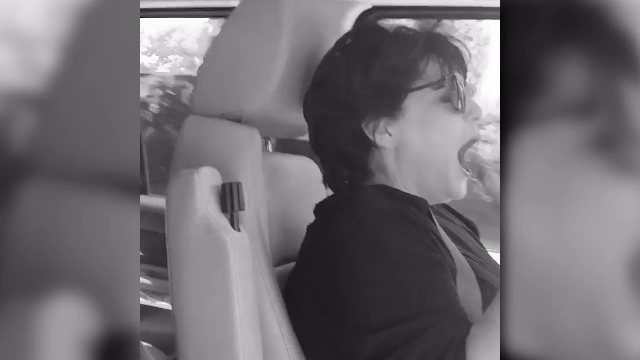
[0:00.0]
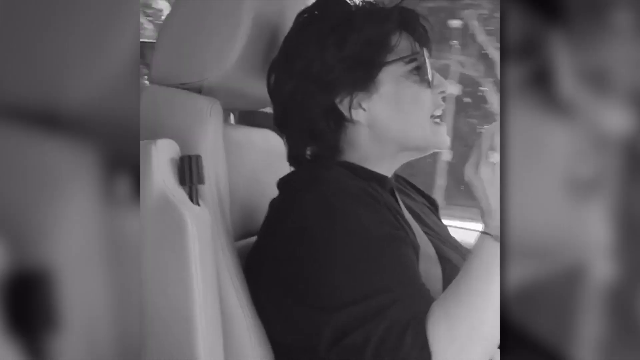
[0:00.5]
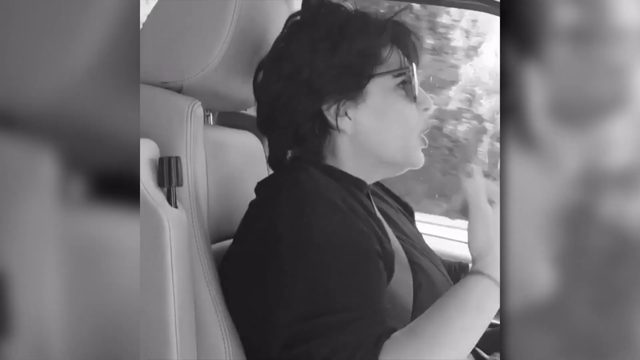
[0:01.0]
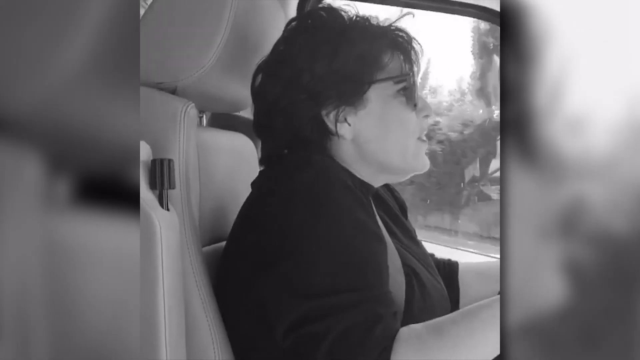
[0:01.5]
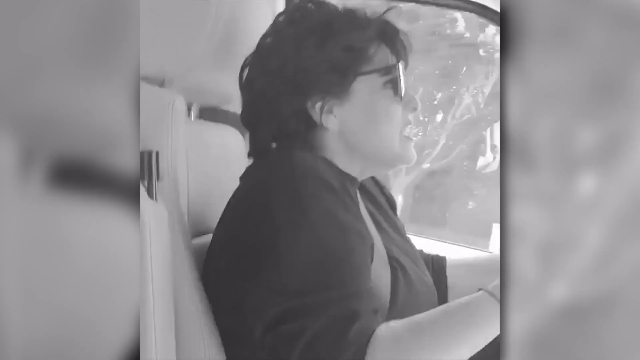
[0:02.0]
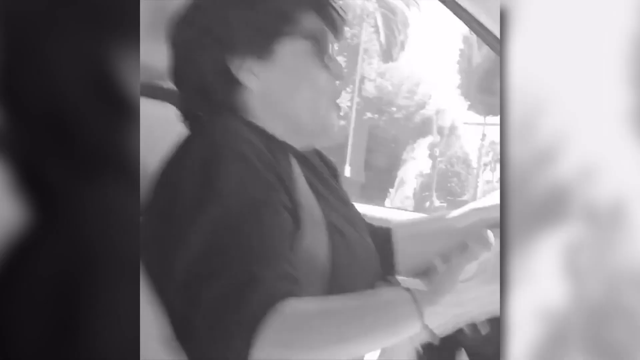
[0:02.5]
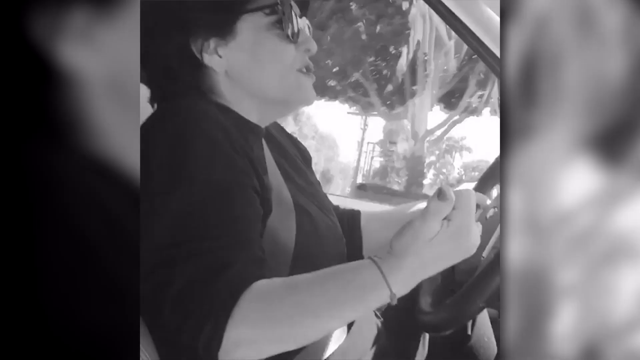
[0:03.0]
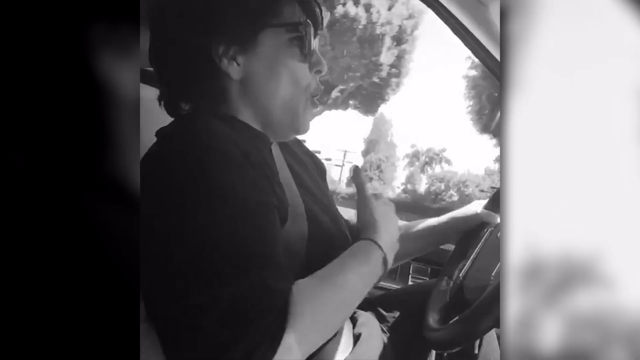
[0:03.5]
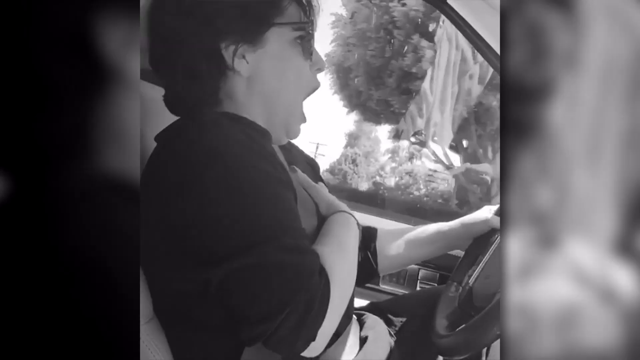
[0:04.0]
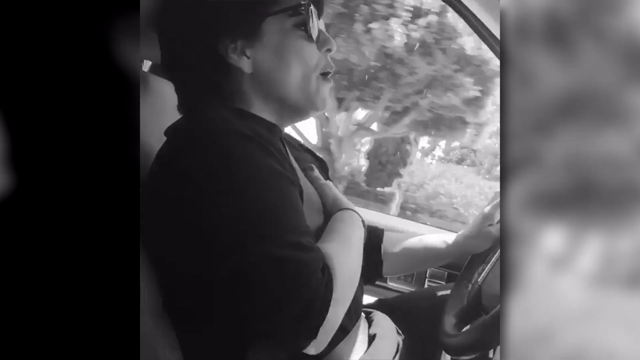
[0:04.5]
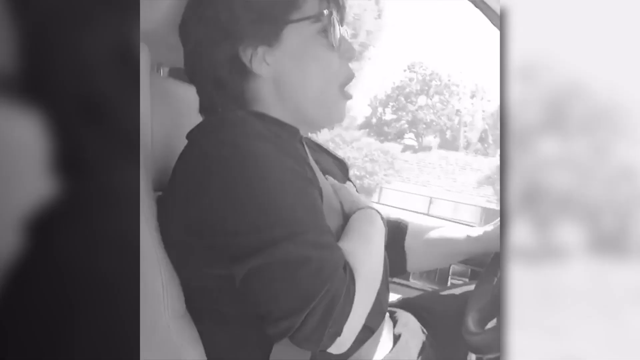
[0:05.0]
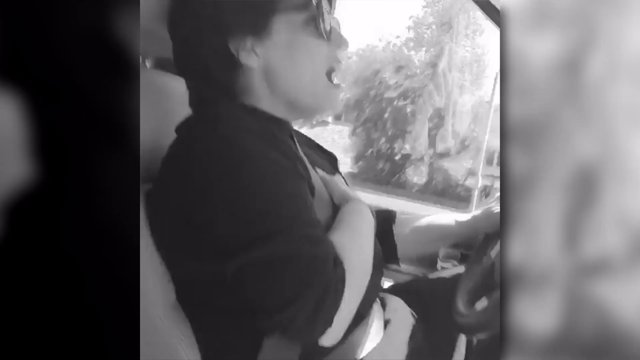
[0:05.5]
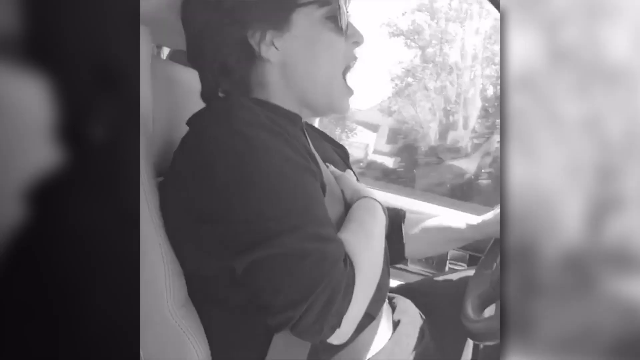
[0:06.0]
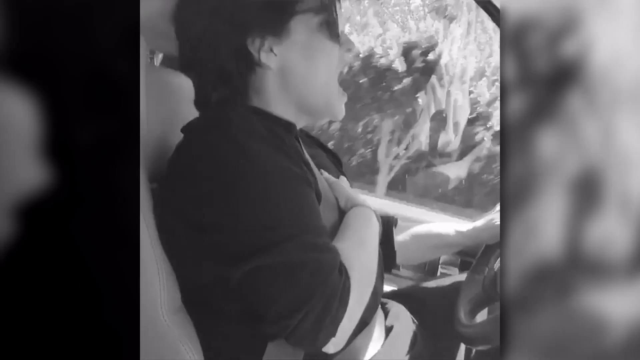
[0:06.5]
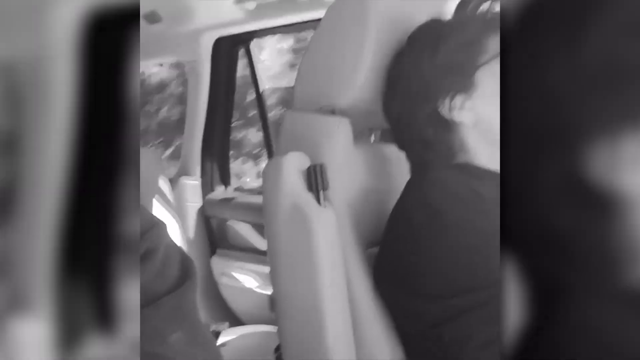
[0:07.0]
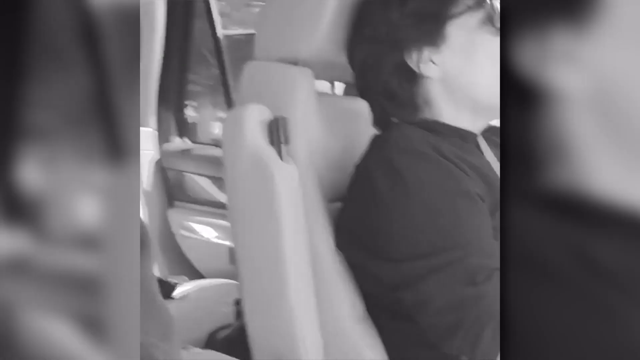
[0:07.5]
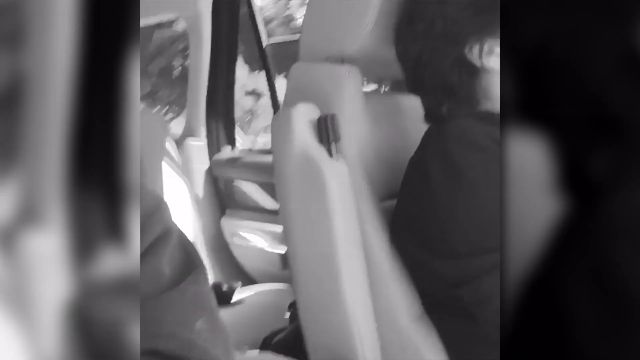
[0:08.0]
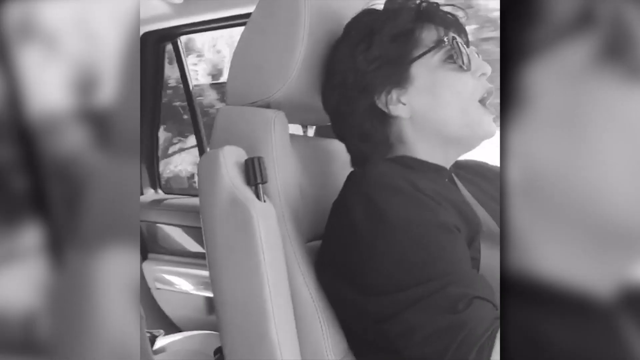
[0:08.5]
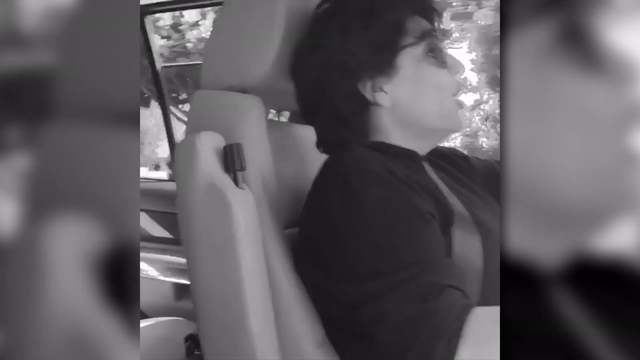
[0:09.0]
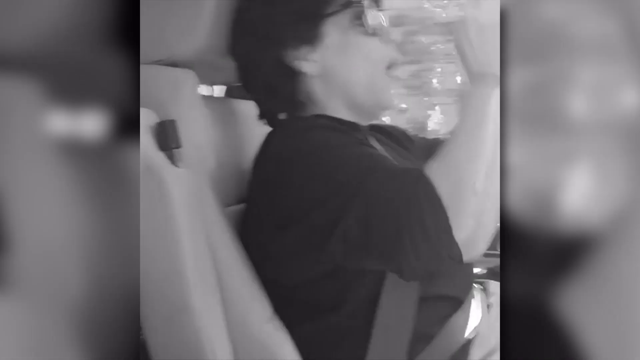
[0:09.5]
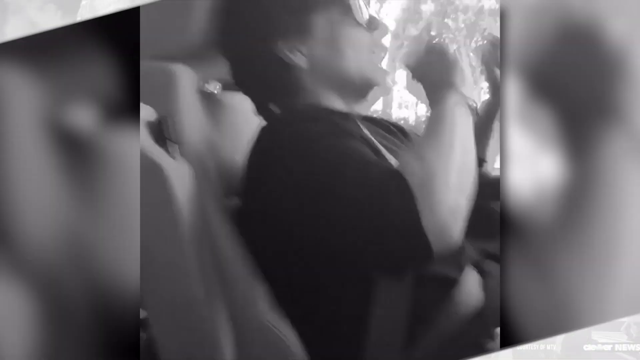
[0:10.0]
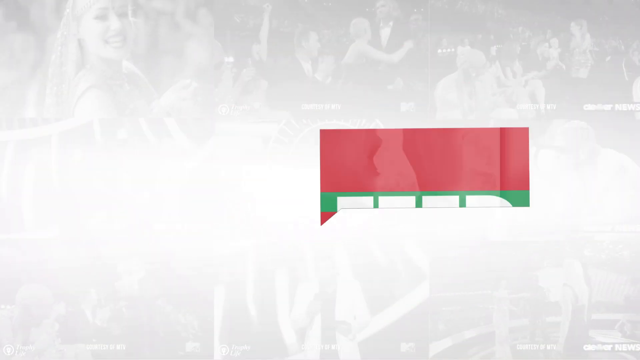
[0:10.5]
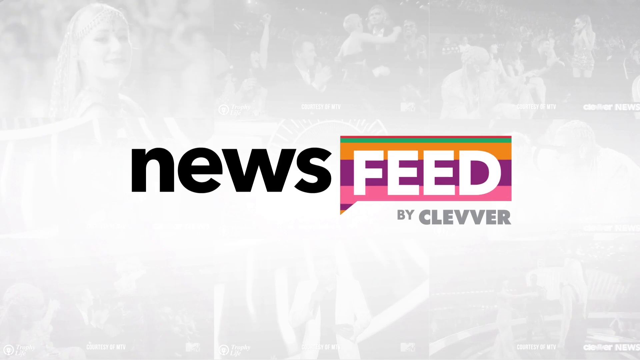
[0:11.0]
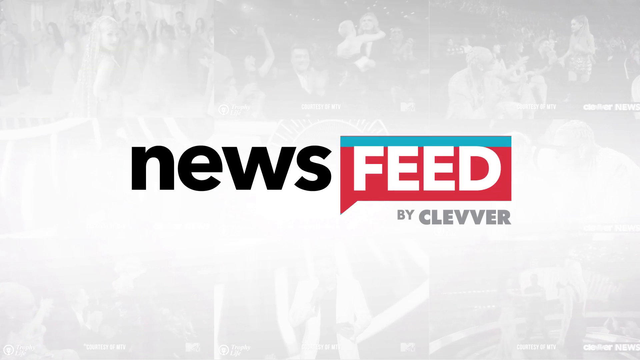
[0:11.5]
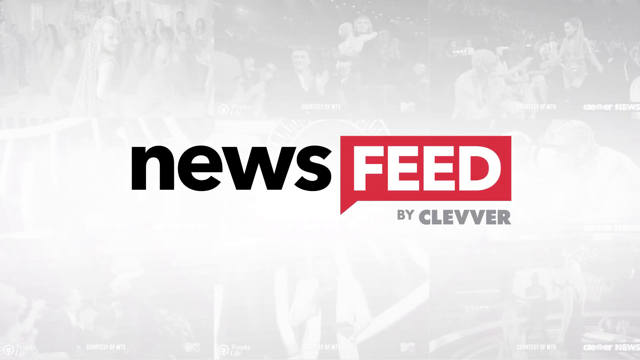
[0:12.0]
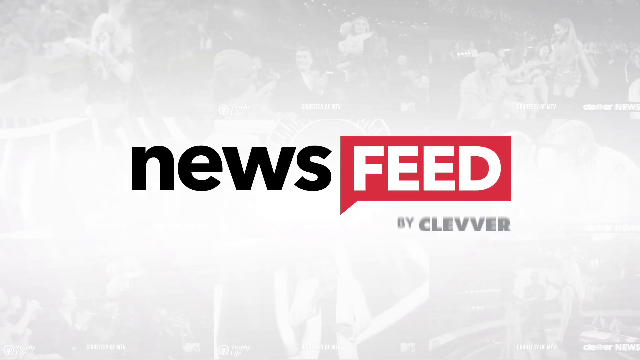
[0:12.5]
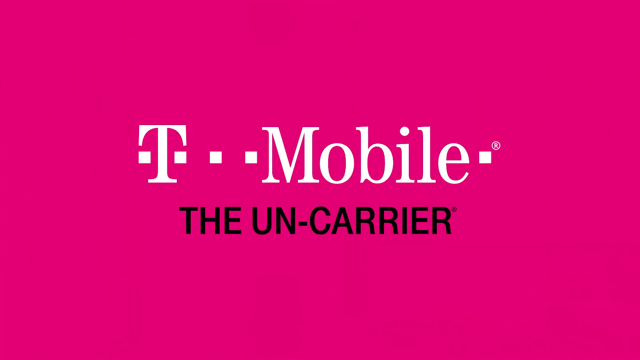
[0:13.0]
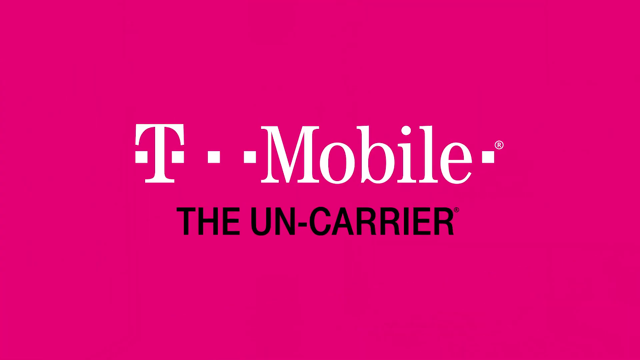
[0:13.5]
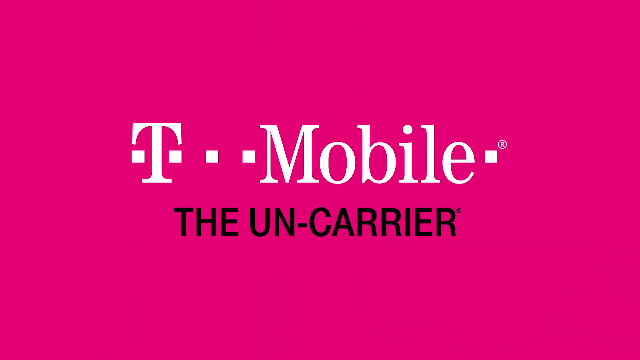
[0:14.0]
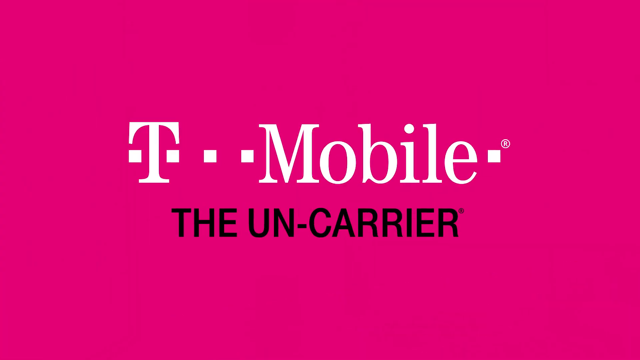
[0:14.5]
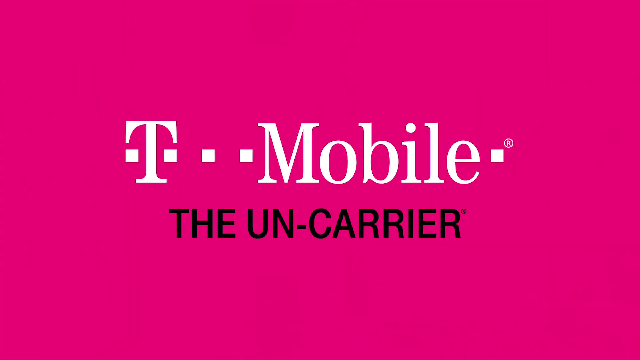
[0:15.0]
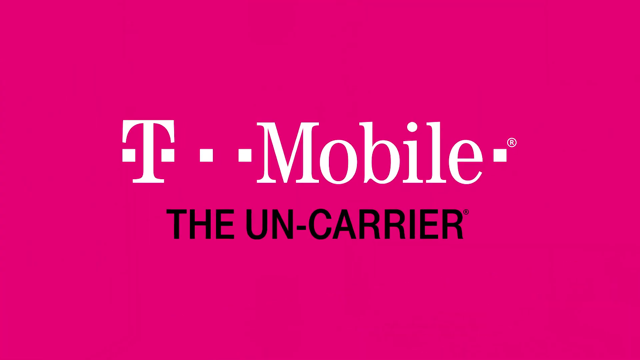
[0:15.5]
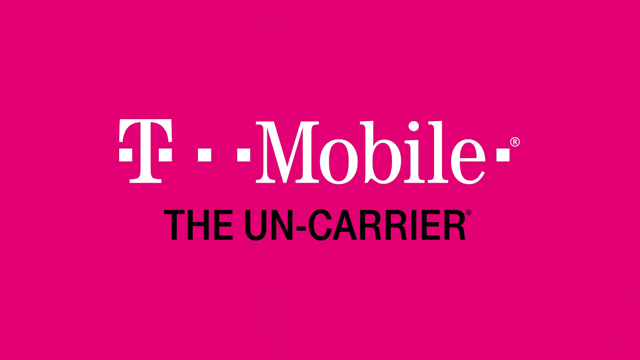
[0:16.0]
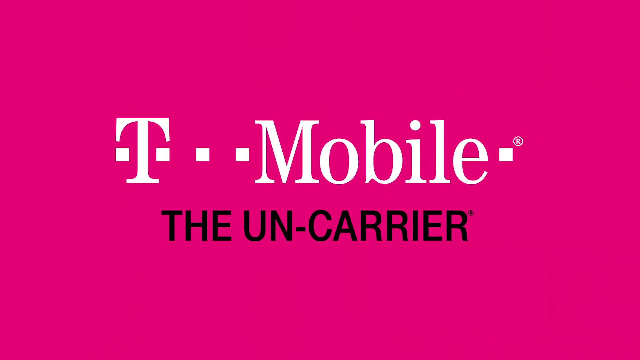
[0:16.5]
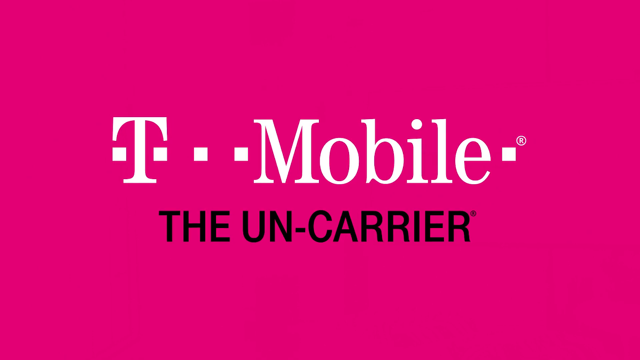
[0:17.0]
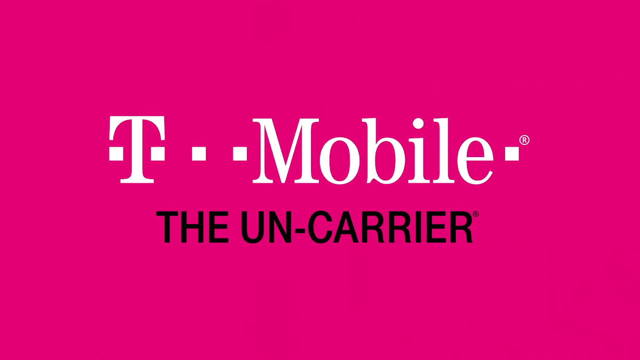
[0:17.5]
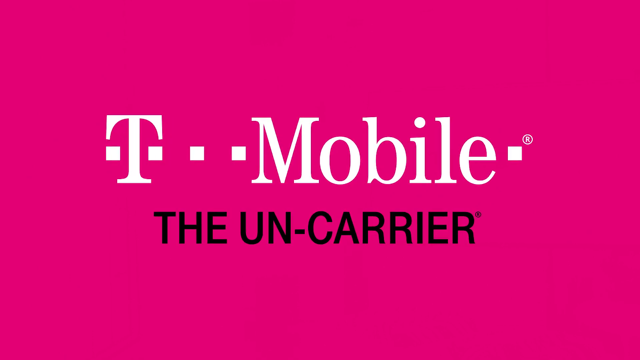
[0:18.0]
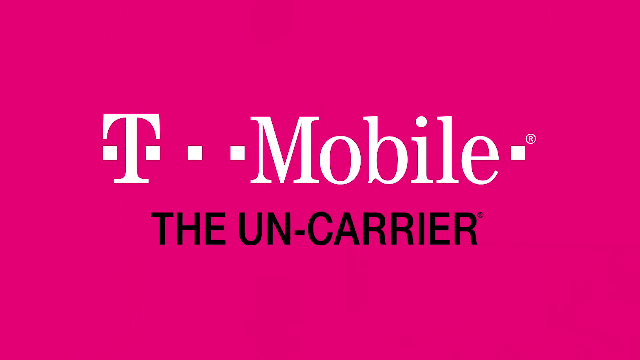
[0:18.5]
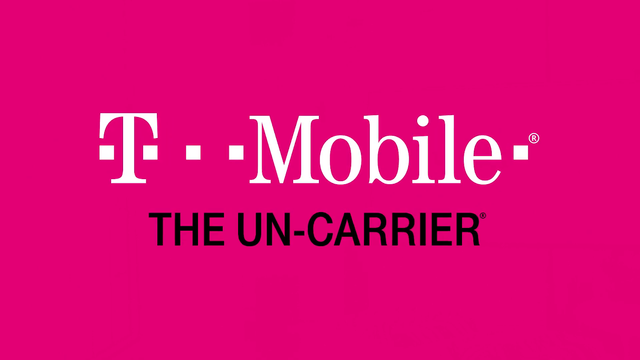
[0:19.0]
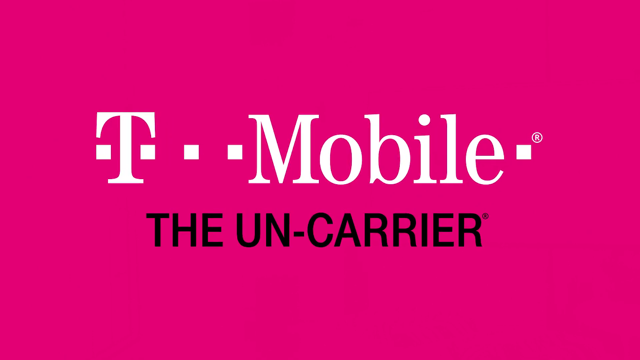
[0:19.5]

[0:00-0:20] The black-and-white video opens on a person sitting in the front seat of a car, seen from the left side of the face while facing right. The person appears to be a woman with very short, dark hair and a dark pair of sunglasses. She talks animatedly, gesturing with her right hand and repeatedly touching her chest. She sits on a white leather car seat, driving in the daytime. Briefly, an individual can be seen in the backseat behind her, though it is not possible to see who it is. The view then shows the outside in daylight as the car passes a neighborhood, with homes and green trees visible through the windows. The scene then cuts to a solid white background with the word "news" in bold black text and the word "feed" in bold white text. Behind the word "feed" is a triangle of horizontal stripes, starting from the top with orange and then purple.